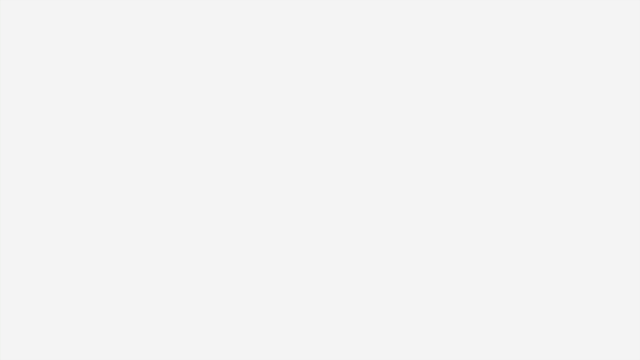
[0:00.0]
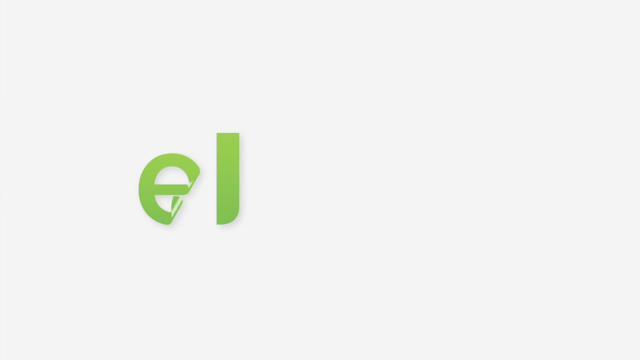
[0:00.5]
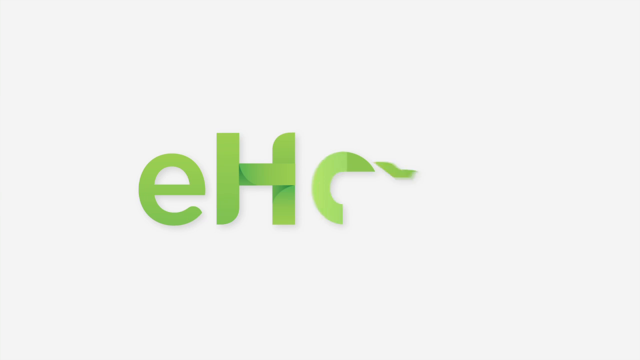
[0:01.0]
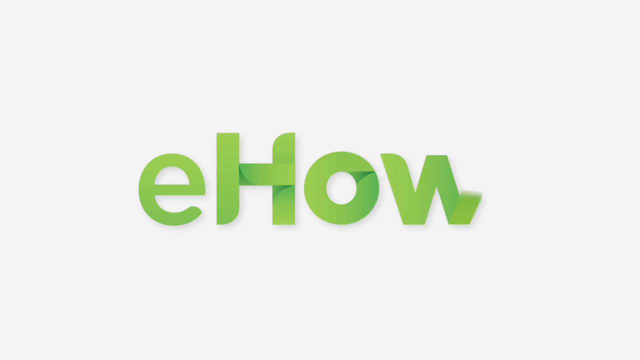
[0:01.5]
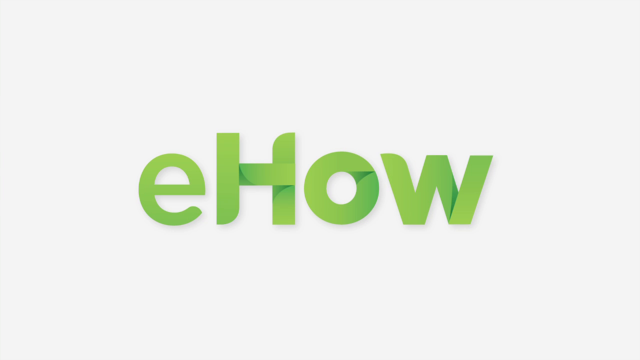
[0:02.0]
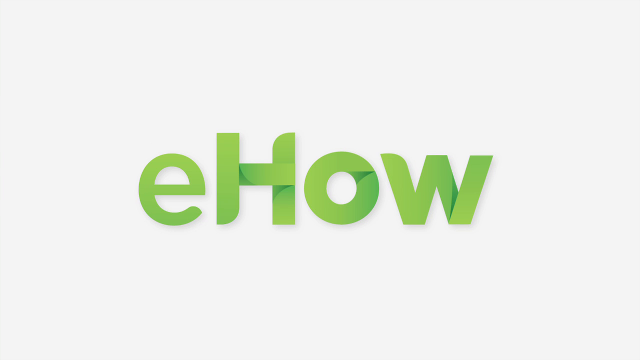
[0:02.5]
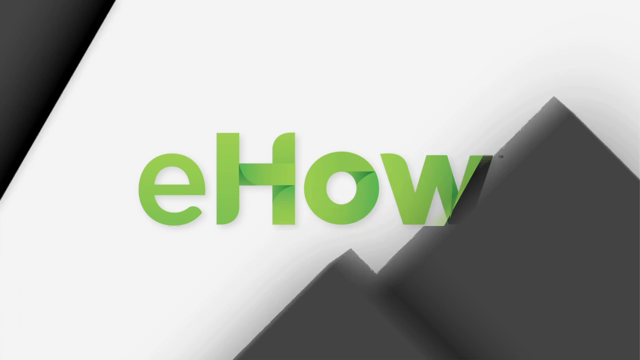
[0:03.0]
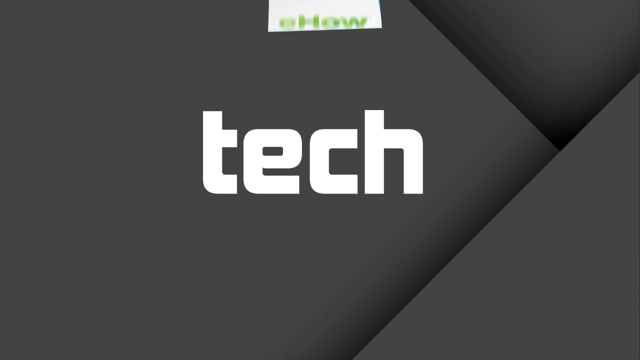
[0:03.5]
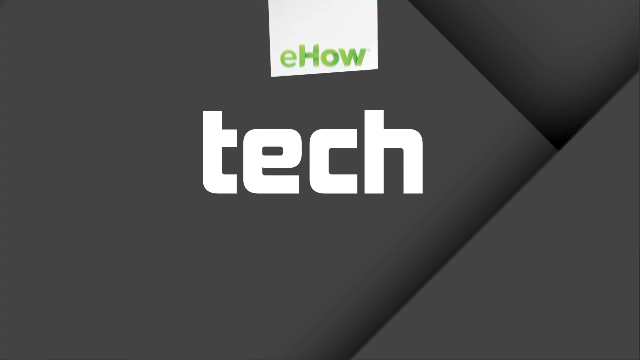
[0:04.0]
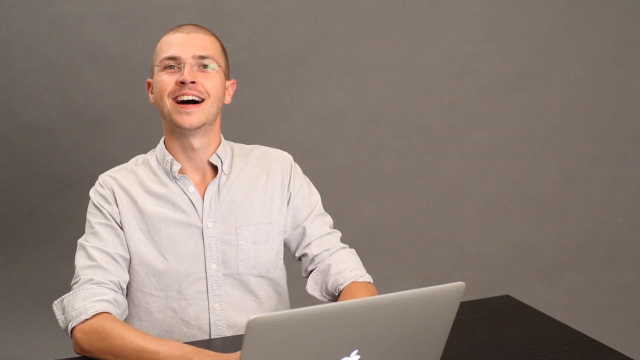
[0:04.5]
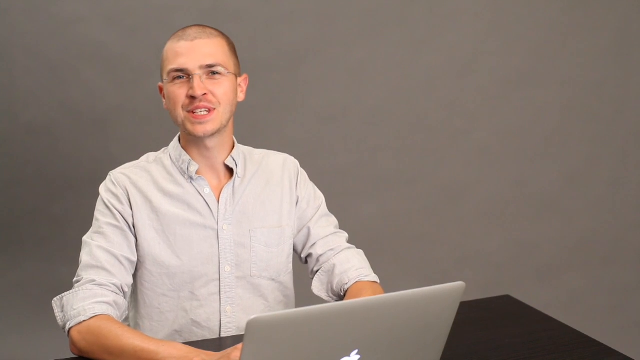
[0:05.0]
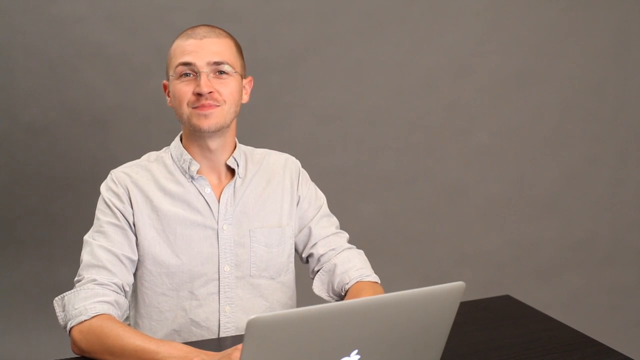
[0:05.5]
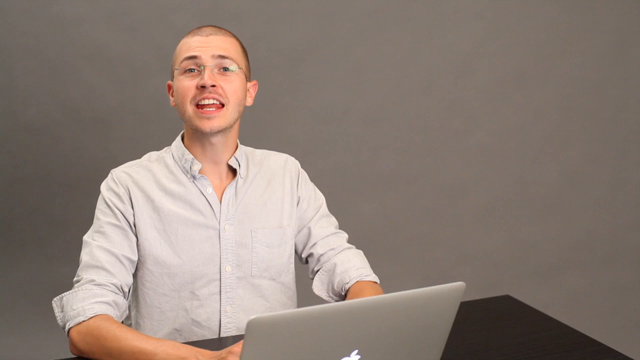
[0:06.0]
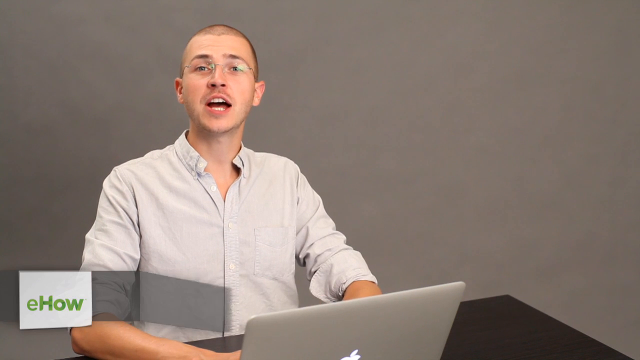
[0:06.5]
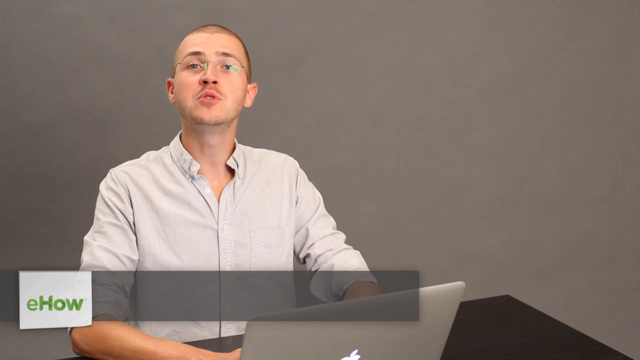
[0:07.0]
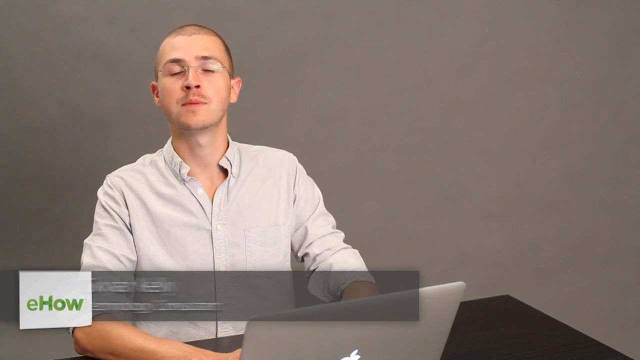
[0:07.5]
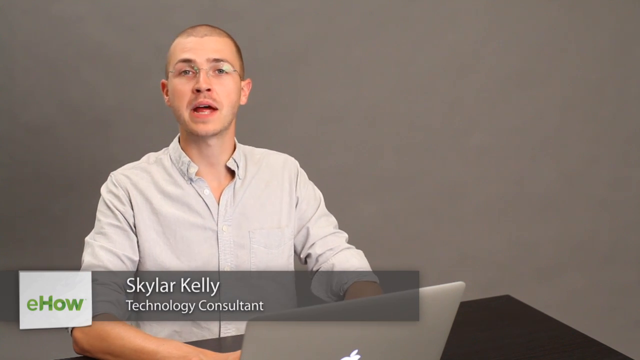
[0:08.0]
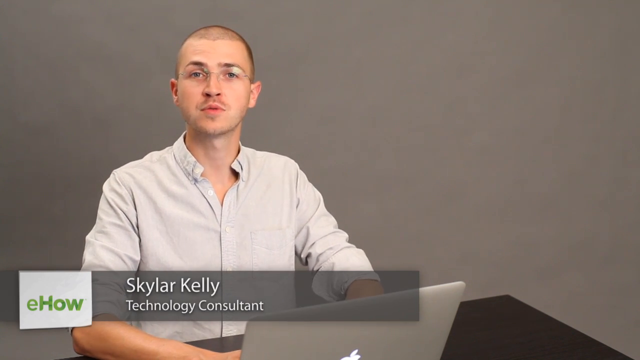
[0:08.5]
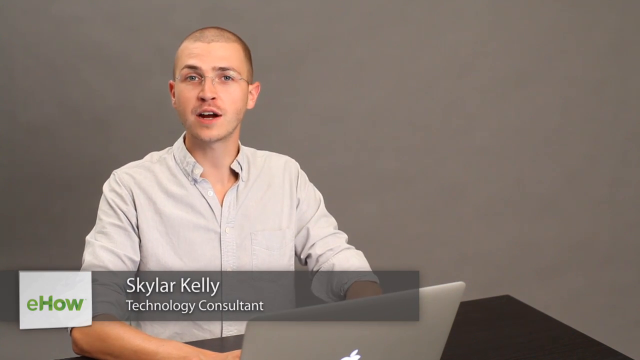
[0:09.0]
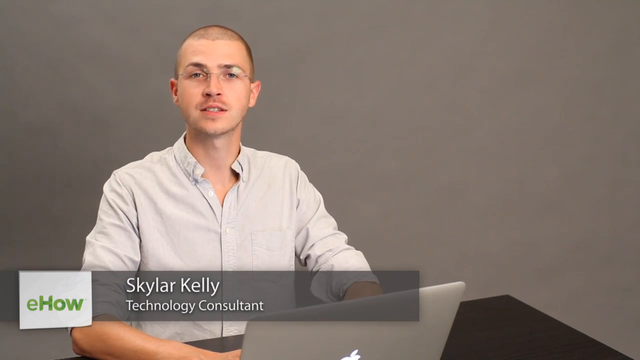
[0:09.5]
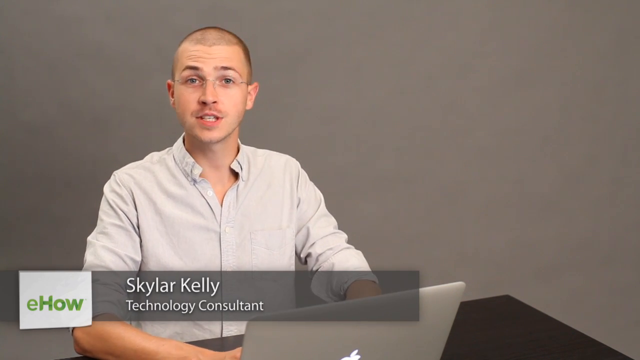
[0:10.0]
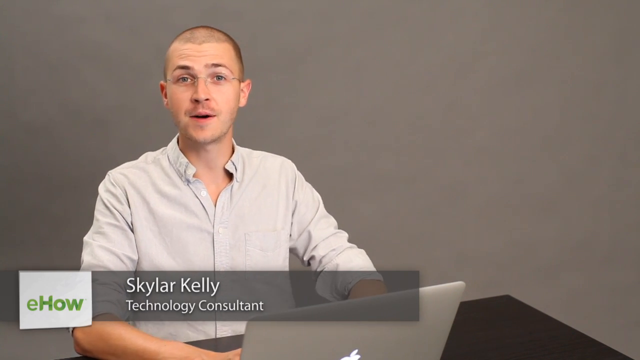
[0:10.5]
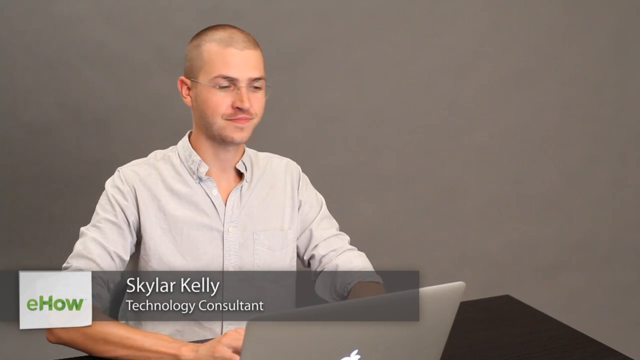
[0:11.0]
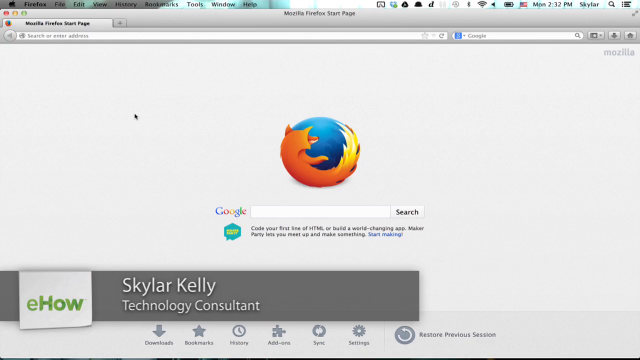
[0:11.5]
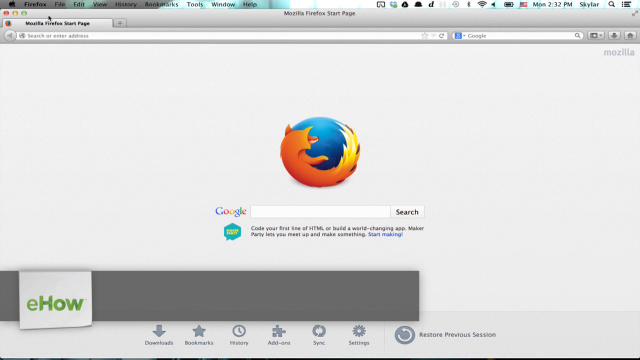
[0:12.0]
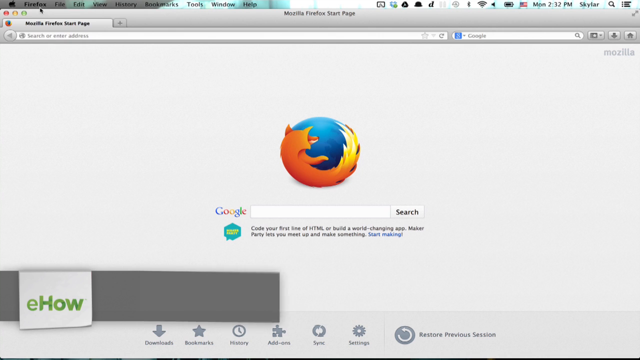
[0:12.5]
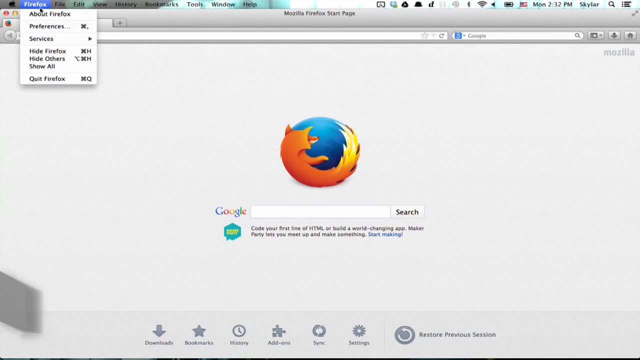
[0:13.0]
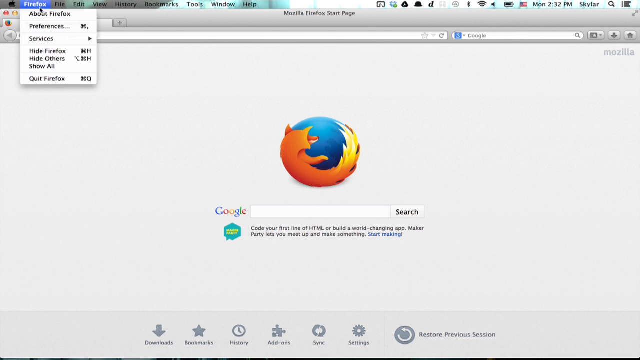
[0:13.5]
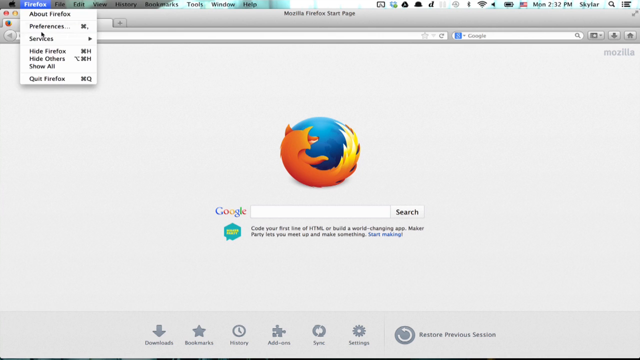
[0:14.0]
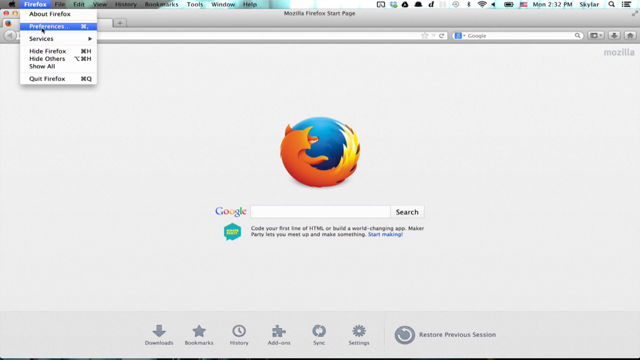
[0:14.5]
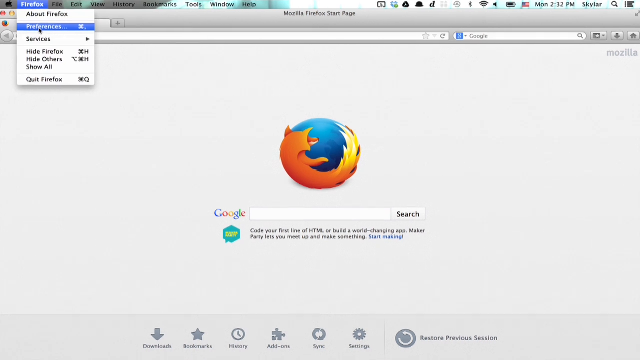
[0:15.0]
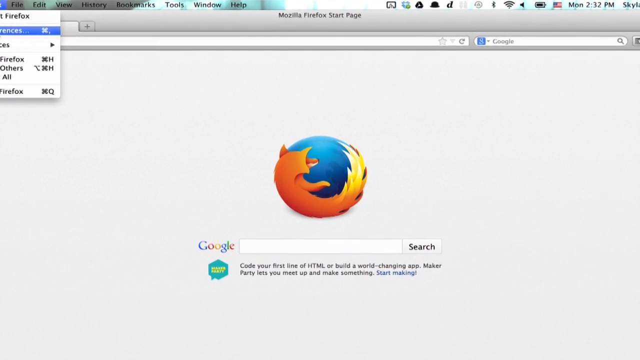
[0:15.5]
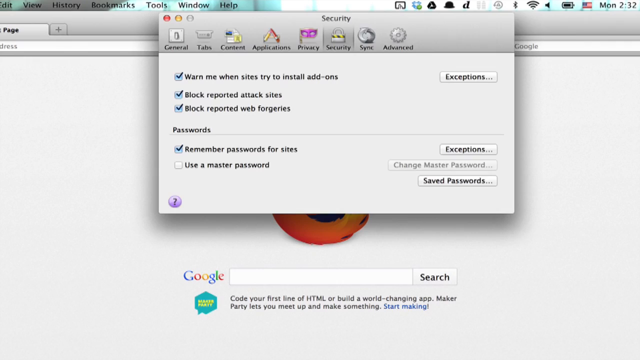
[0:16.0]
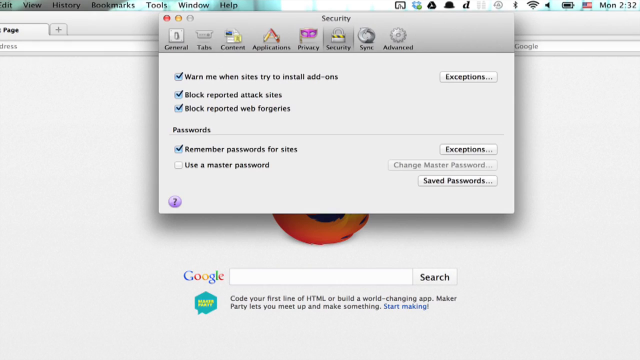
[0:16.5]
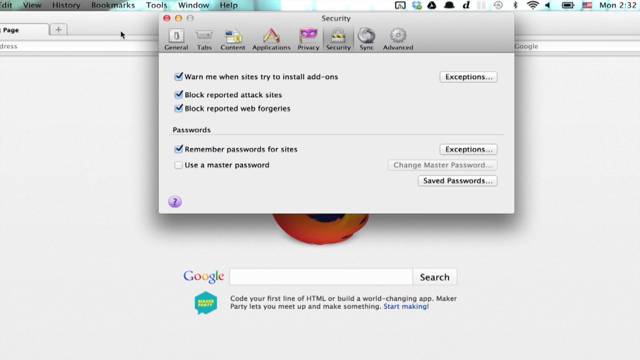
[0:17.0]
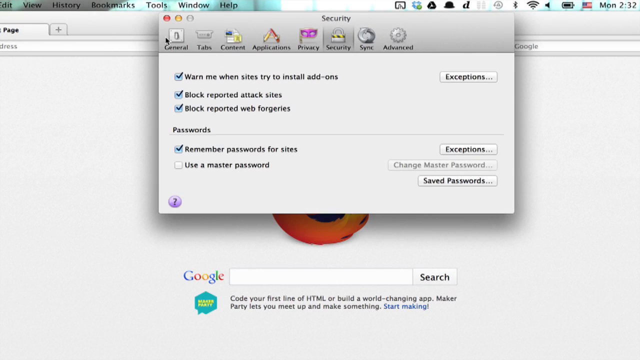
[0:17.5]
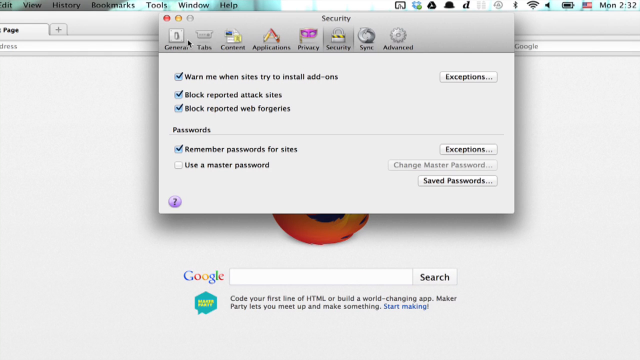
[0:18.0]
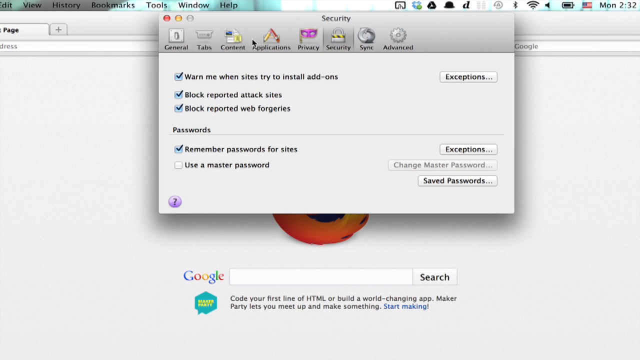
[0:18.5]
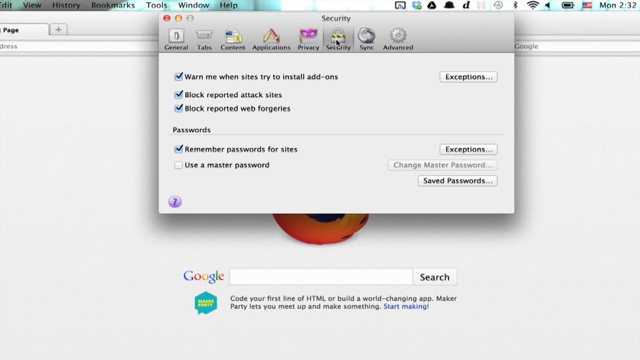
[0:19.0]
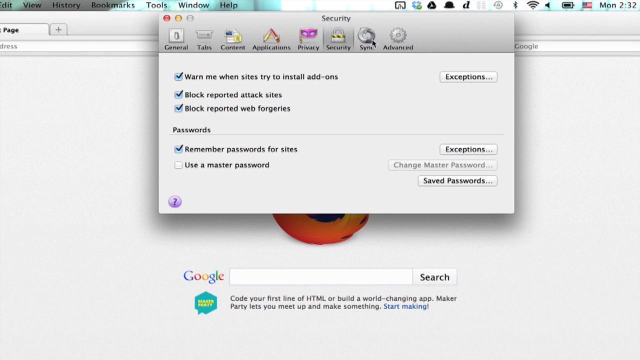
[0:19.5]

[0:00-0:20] The video is on a website called eHow, where a man, a tech consultant named Skyler Kelly, is explaining something. He goes onto Firefox and appears to be looking at recommendations, though this is unclear. The page looks modern, high-tech and well put together.